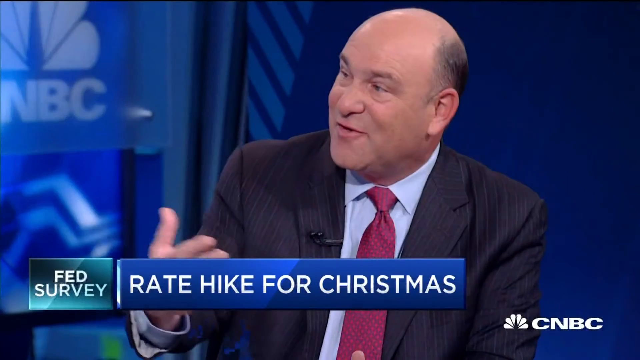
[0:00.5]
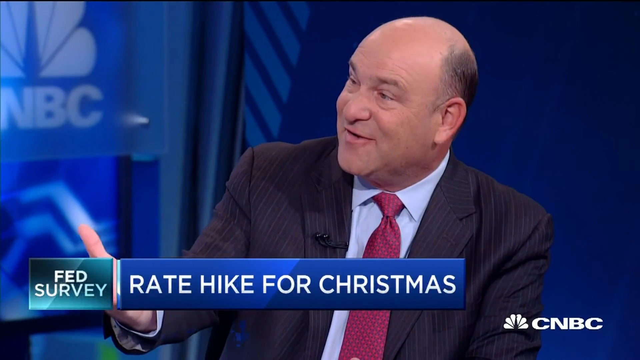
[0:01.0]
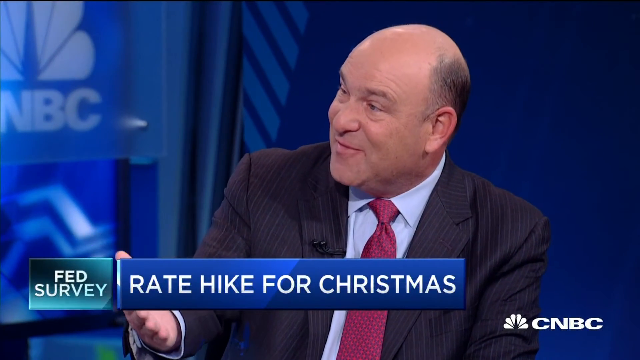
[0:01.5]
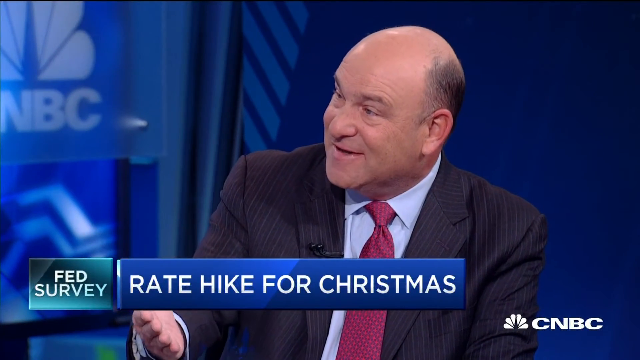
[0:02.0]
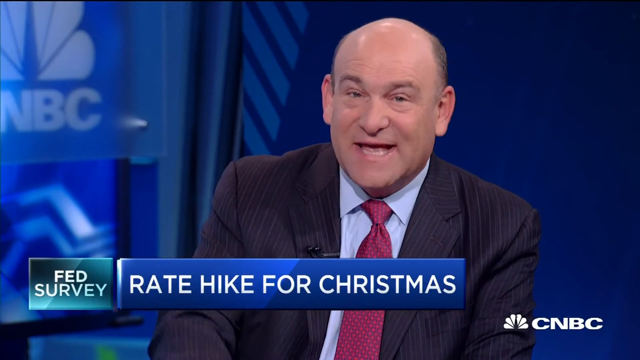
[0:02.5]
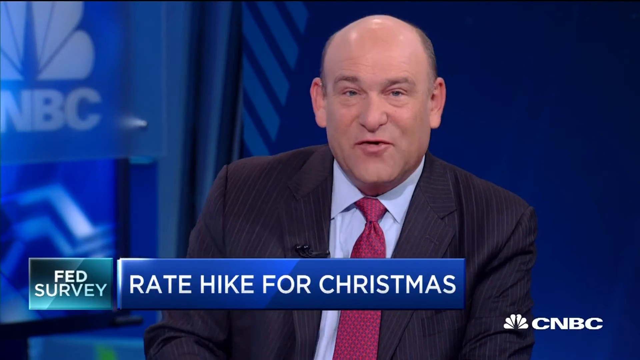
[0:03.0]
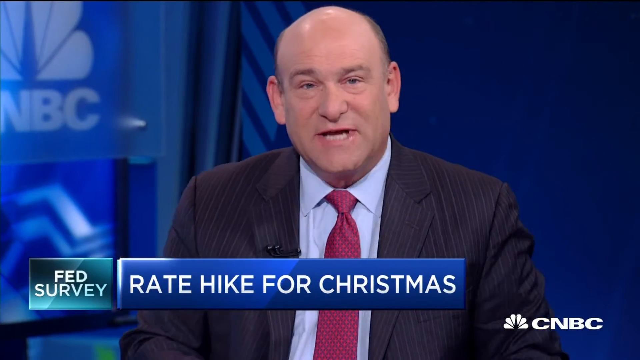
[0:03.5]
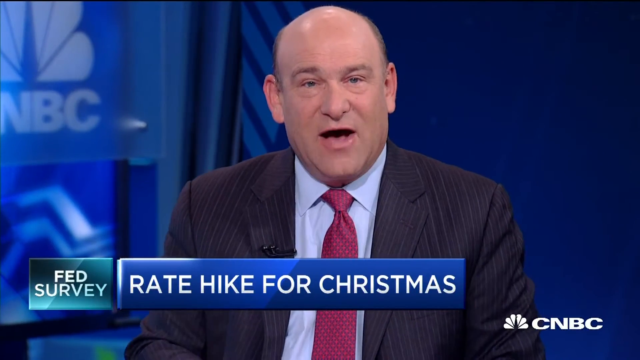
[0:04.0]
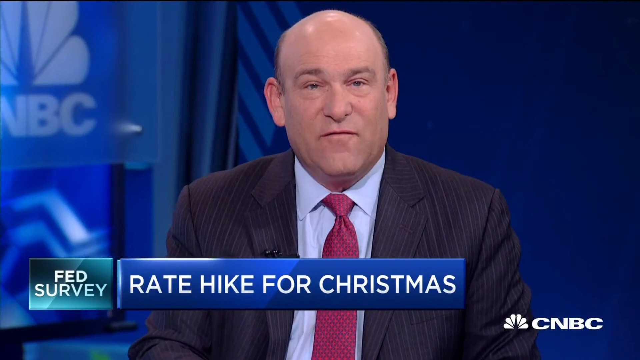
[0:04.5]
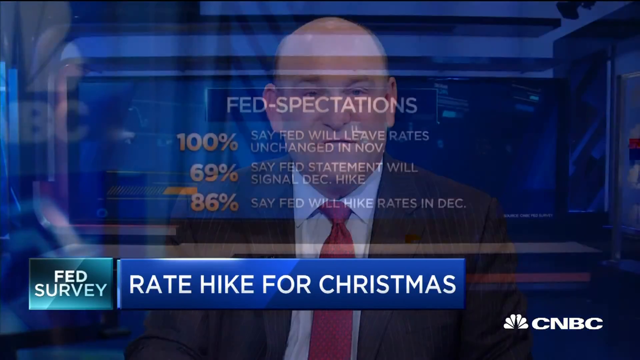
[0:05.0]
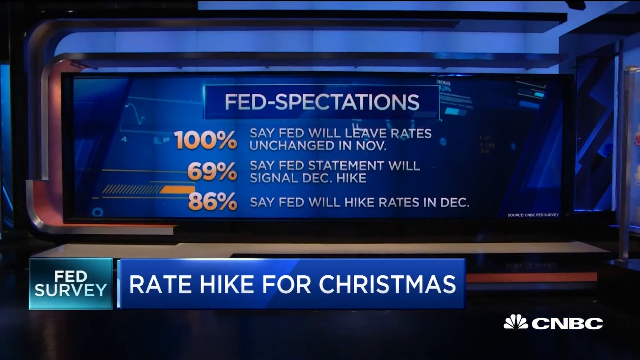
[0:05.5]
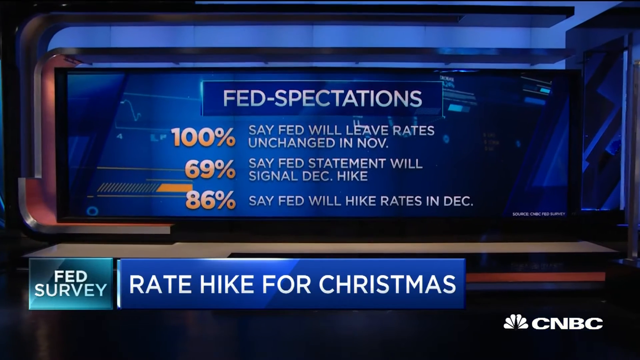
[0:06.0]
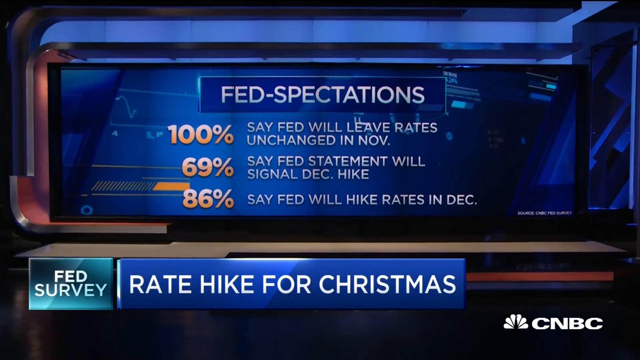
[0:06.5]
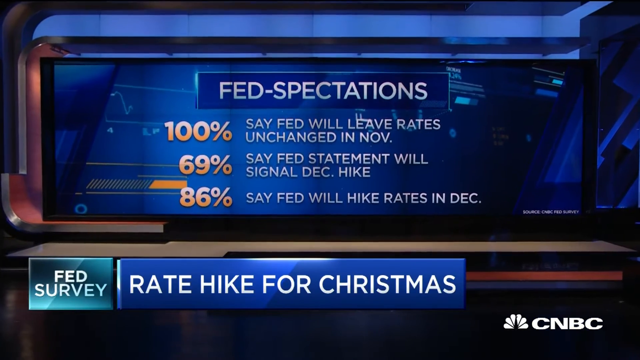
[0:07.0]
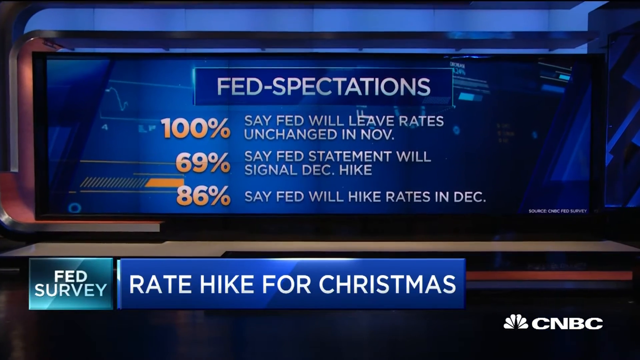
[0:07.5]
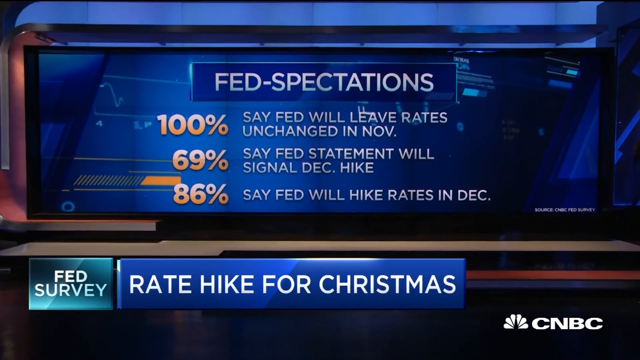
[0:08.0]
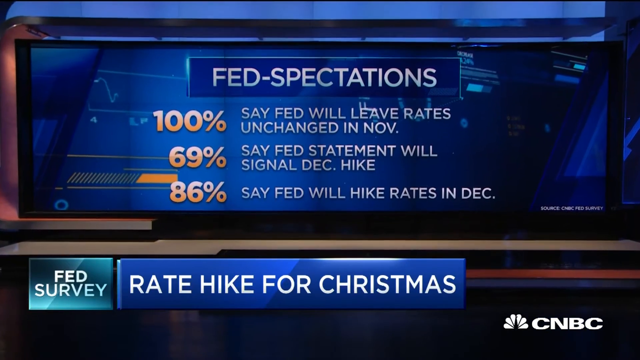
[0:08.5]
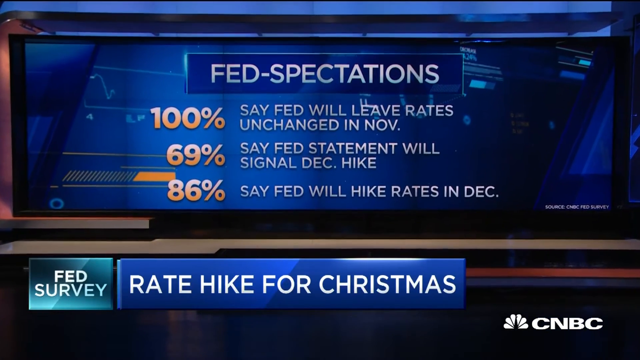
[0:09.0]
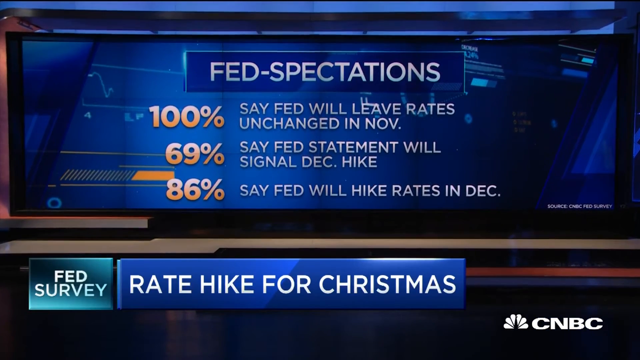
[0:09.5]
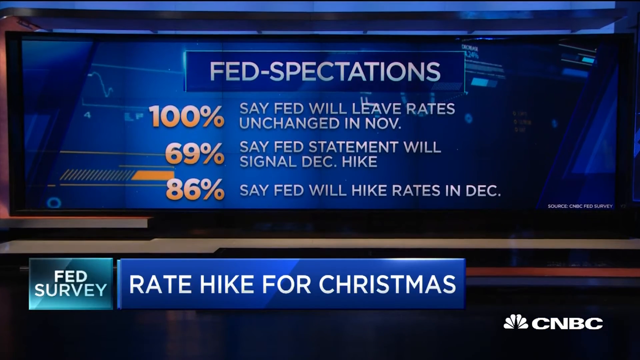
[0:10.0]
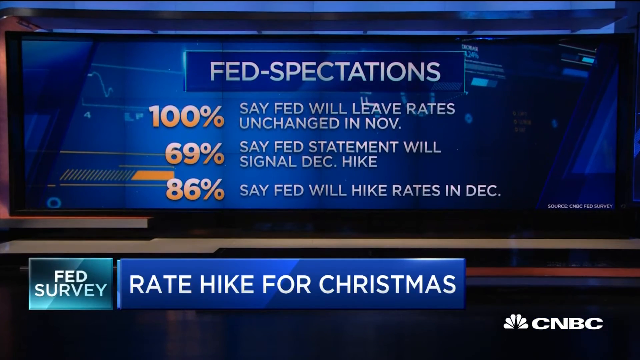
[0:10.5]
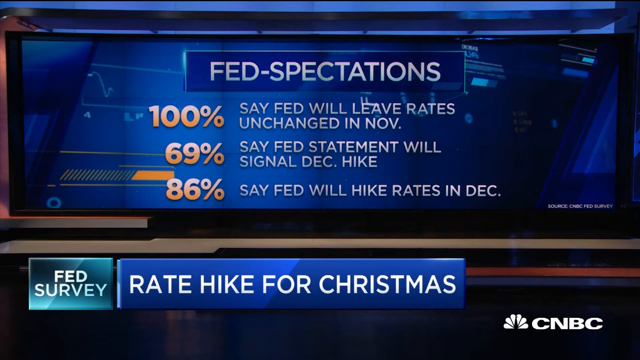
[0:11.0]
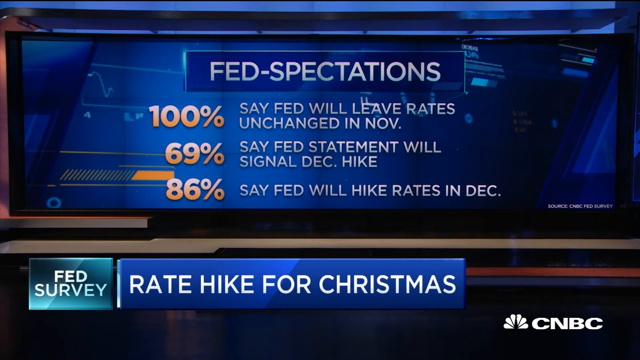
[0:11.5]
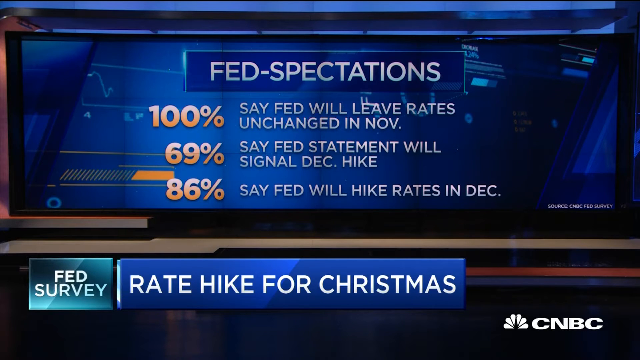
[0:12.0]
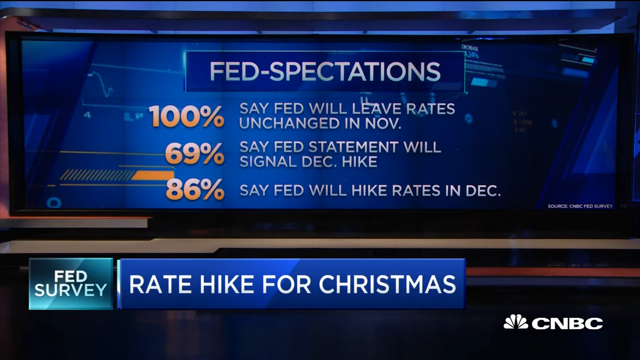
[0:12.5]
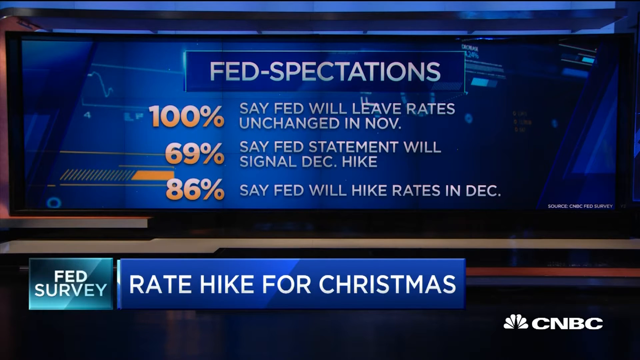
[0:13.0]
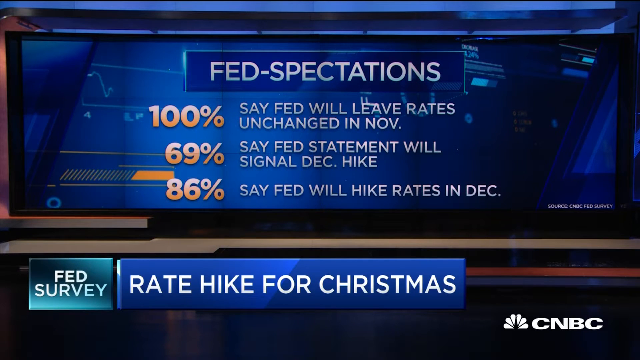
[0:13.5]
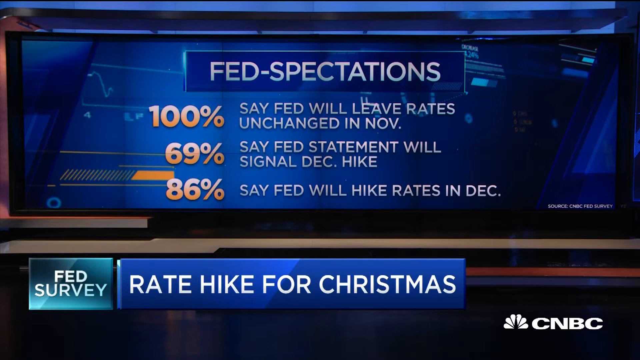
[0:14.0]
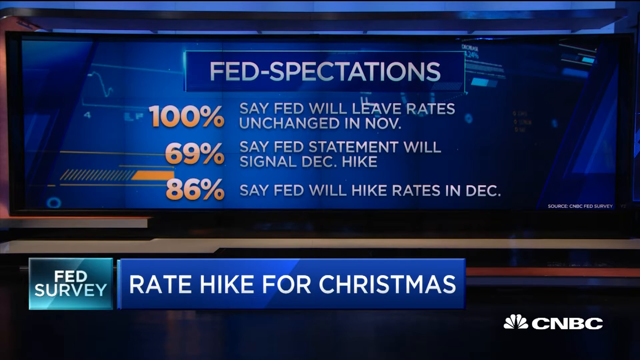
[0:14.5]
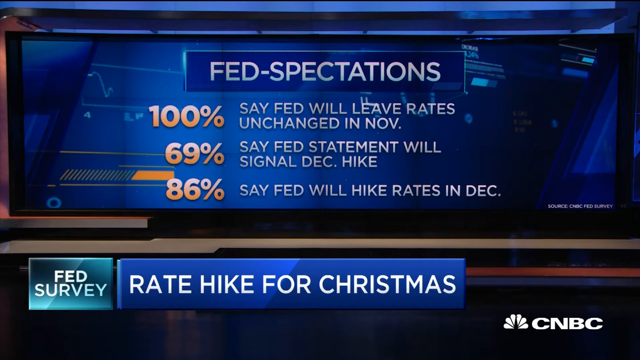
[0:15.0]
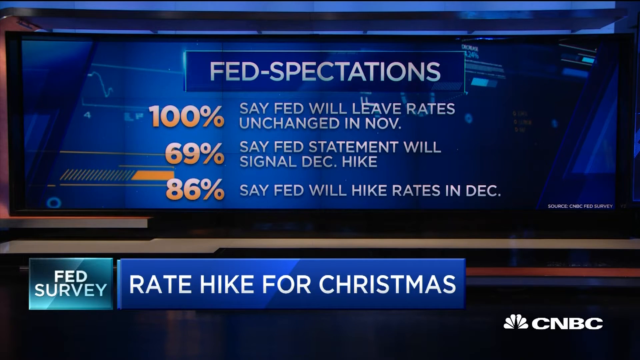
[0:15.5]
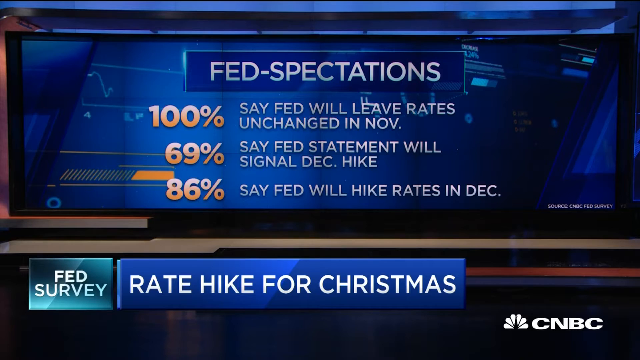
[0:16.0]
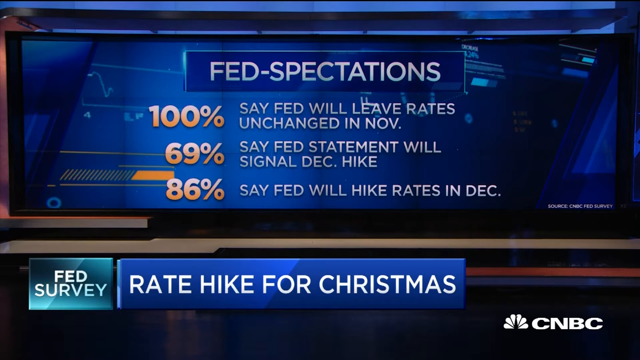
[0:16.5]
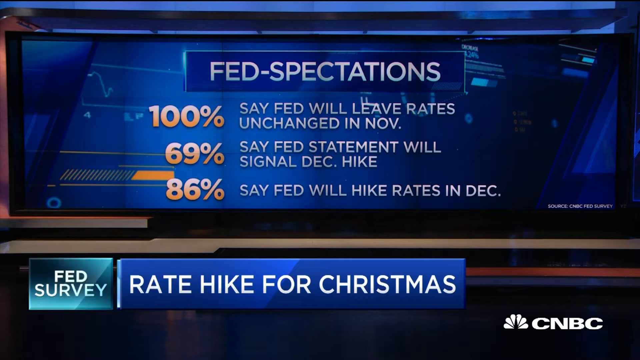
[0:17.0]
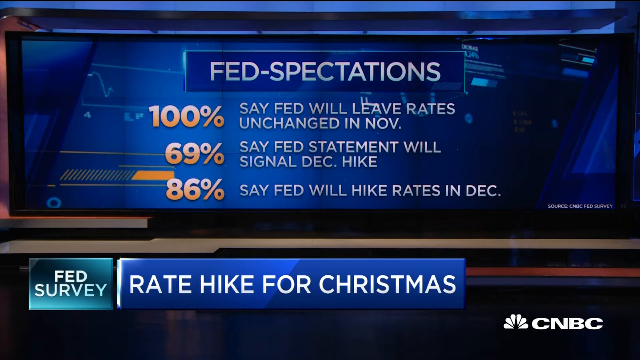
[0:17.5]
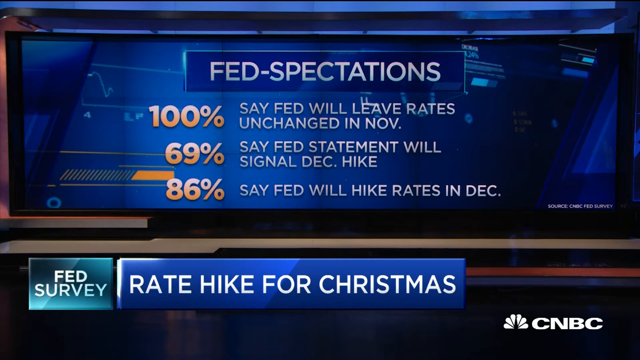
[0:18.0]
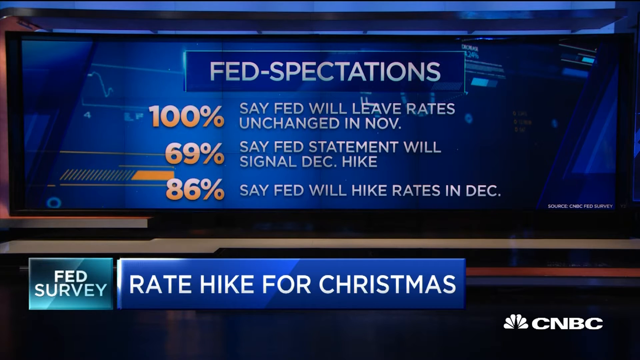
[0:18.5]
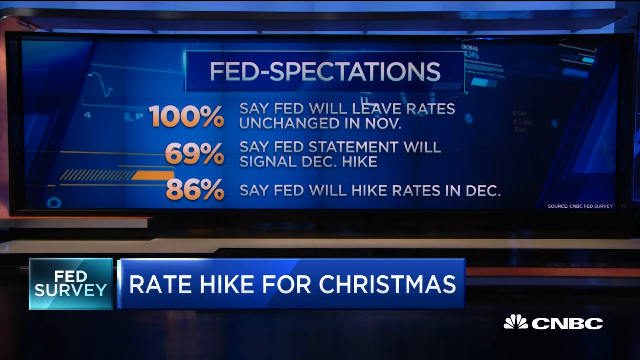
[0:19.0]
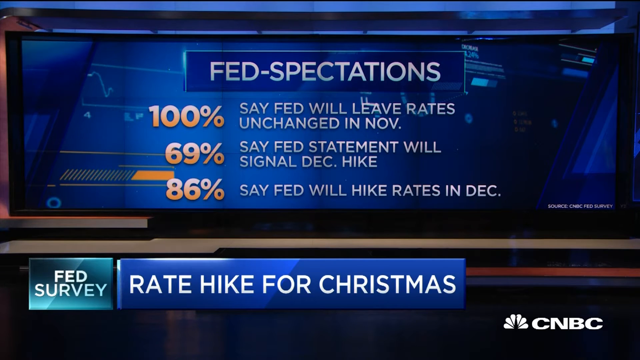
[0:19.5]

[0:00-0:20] A bald-headed white man appears on the show, making gestures with his hand. He wears a dark navy blue suit, a sky blue shirt, and a red or white tie. NBC is visible behind him. He looks toward his left-hand side and then toward the TV, and it looks as if he is talking to someone on the show. A screen shows "fed expectations": "100% say fed will leave rates unchanged in November", "69% say fed statement will signal December hike", and "86% say fed will hike rates in December". The program is titled "fed survey", "rate hike for Christmas".